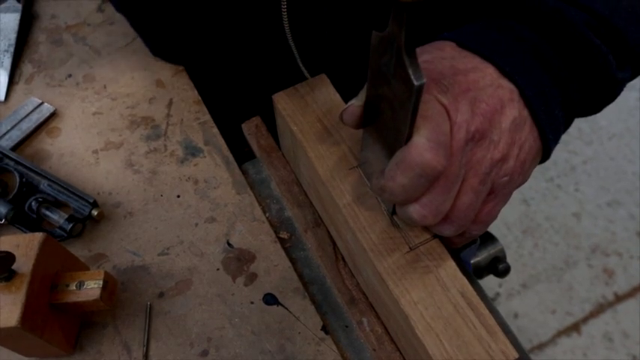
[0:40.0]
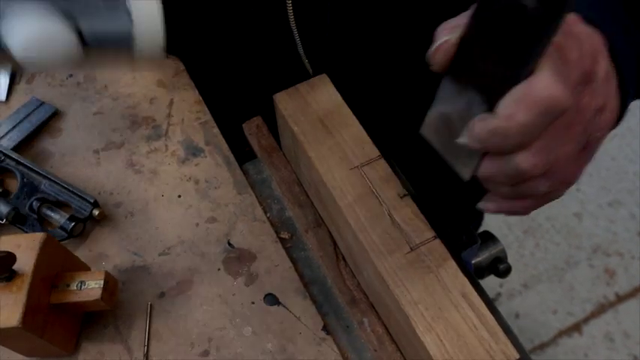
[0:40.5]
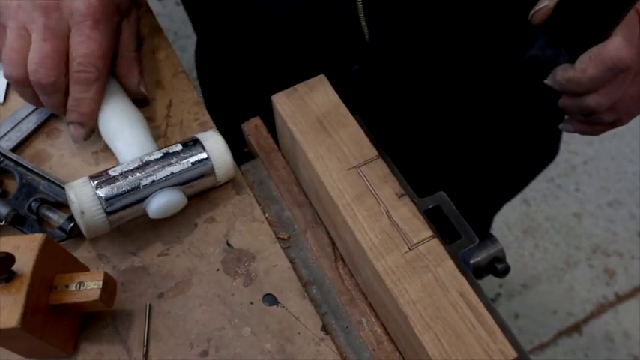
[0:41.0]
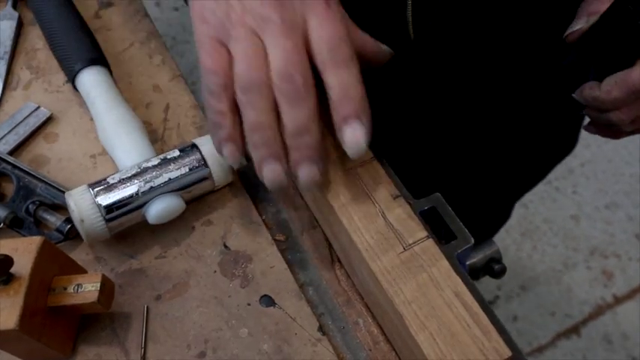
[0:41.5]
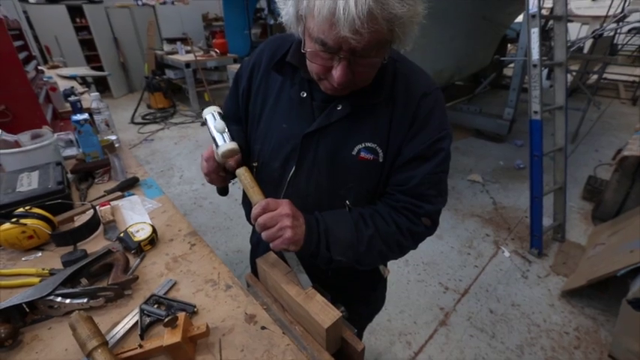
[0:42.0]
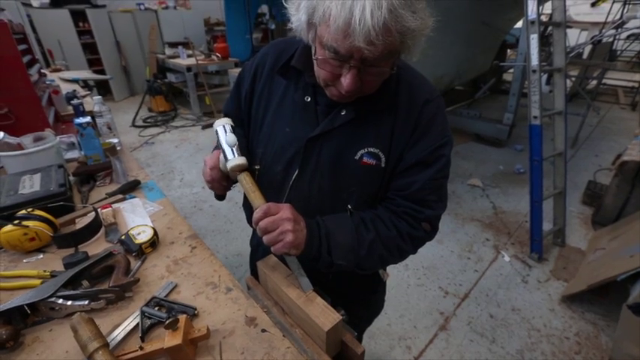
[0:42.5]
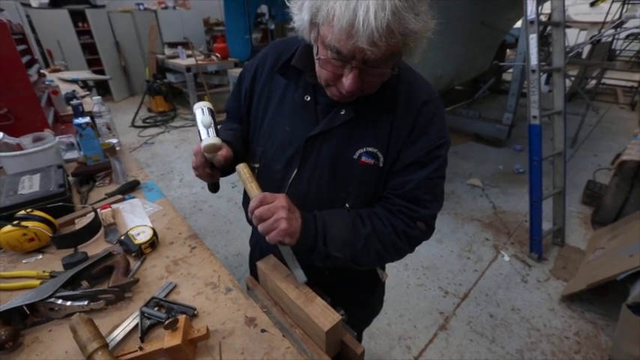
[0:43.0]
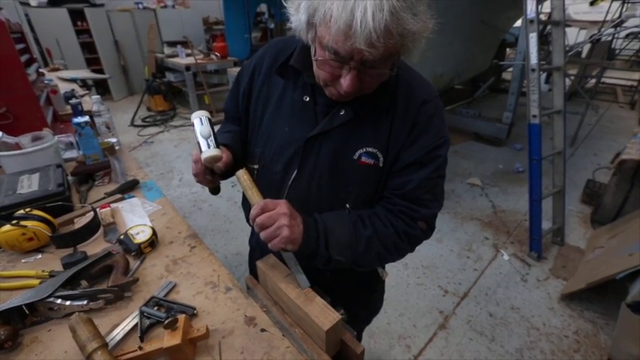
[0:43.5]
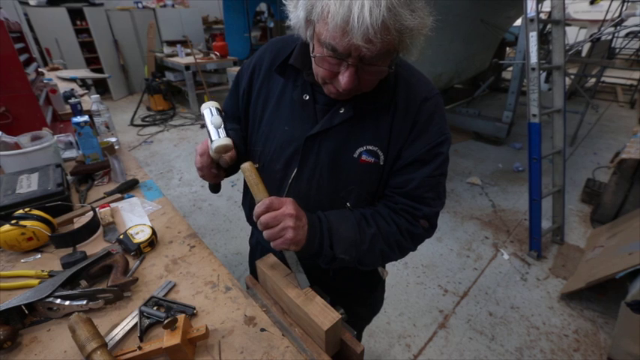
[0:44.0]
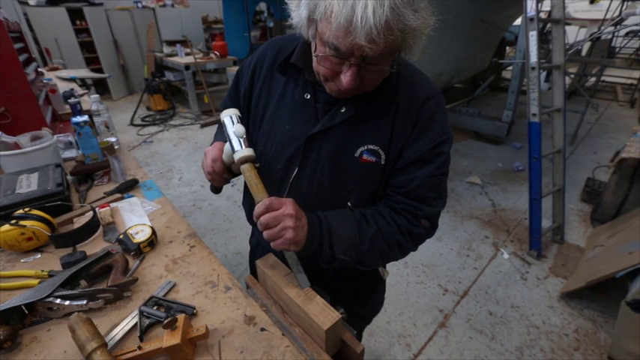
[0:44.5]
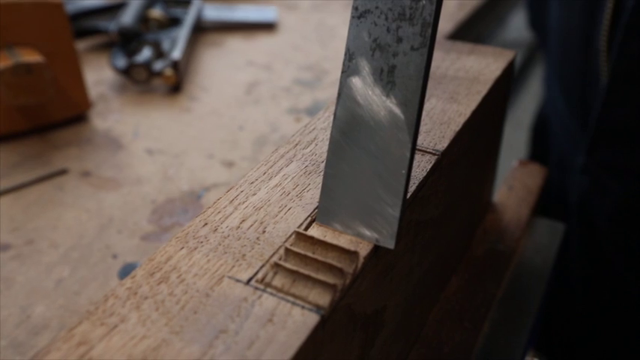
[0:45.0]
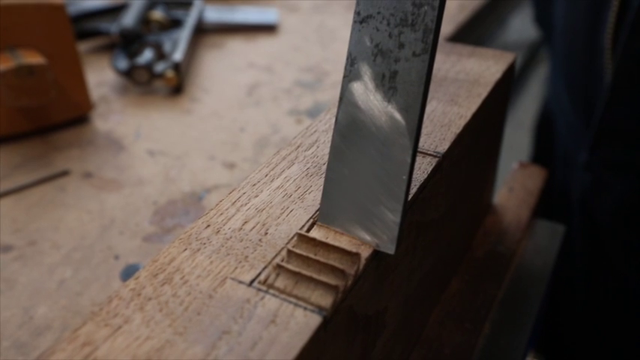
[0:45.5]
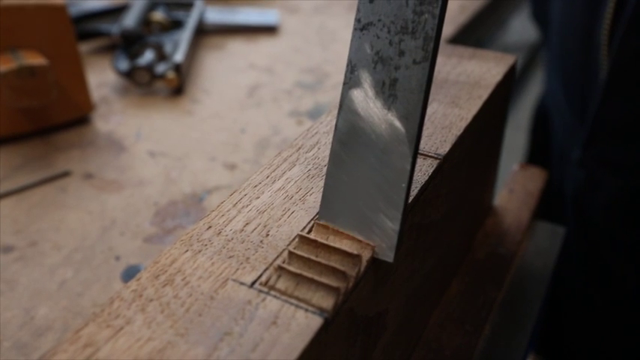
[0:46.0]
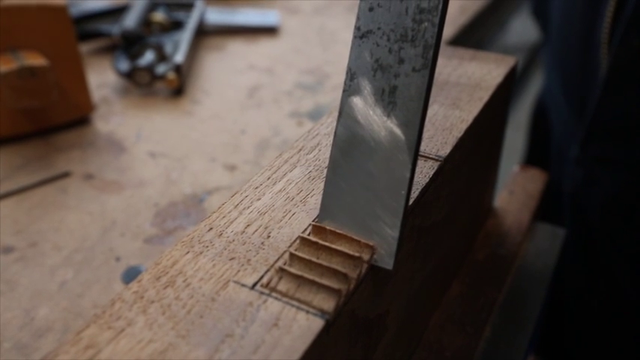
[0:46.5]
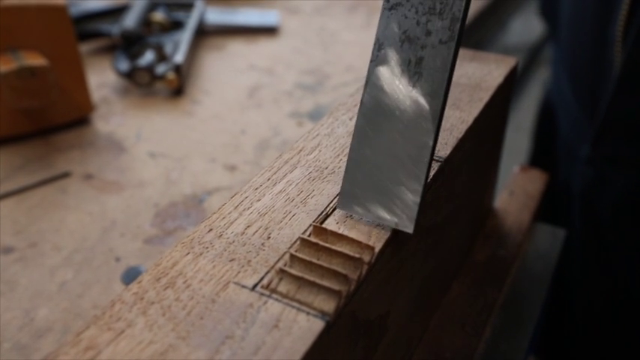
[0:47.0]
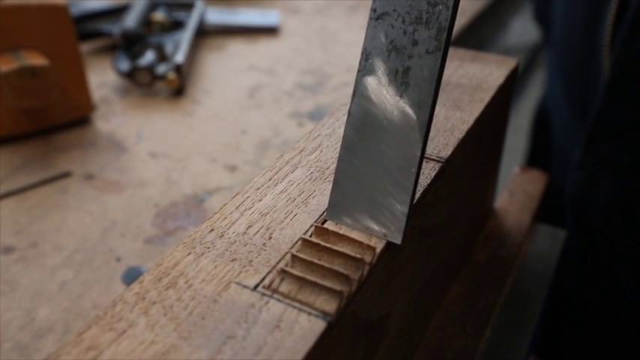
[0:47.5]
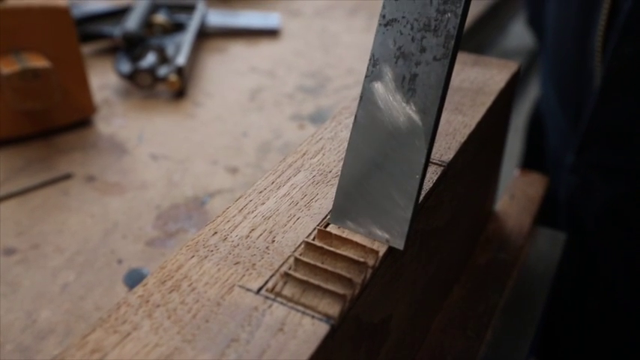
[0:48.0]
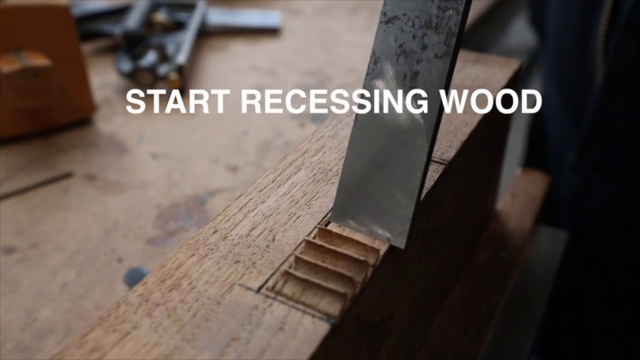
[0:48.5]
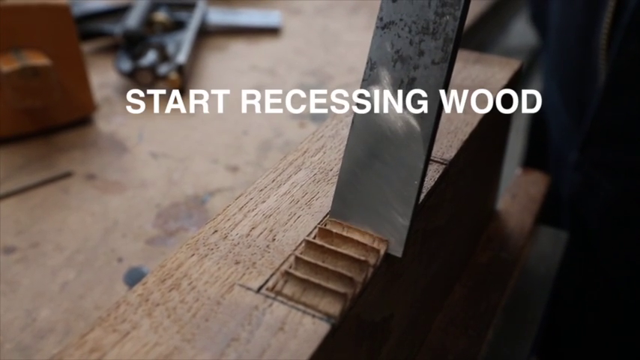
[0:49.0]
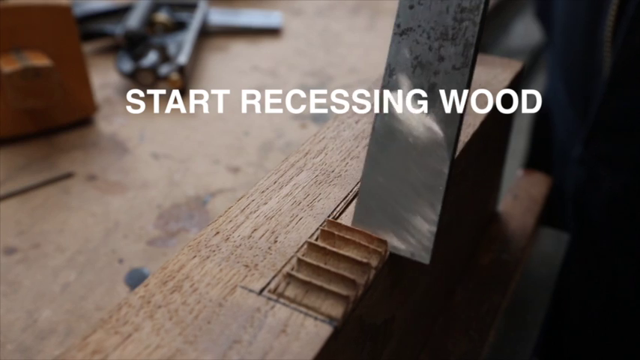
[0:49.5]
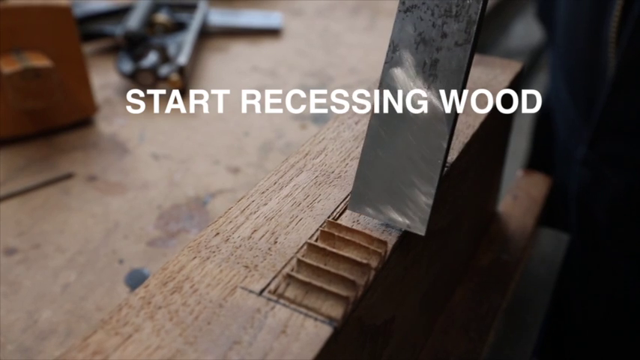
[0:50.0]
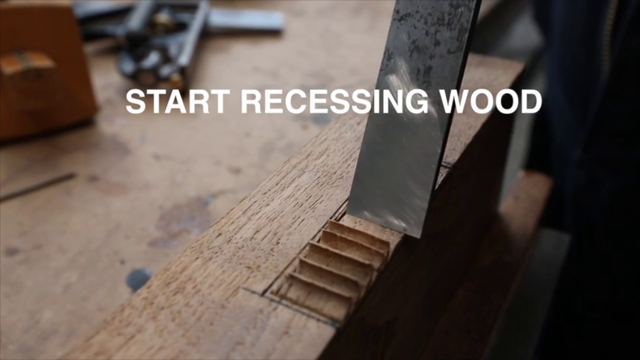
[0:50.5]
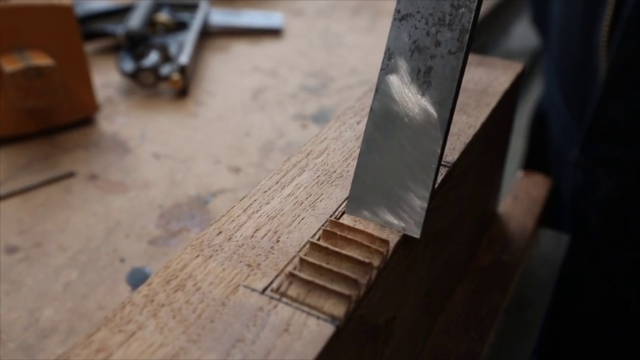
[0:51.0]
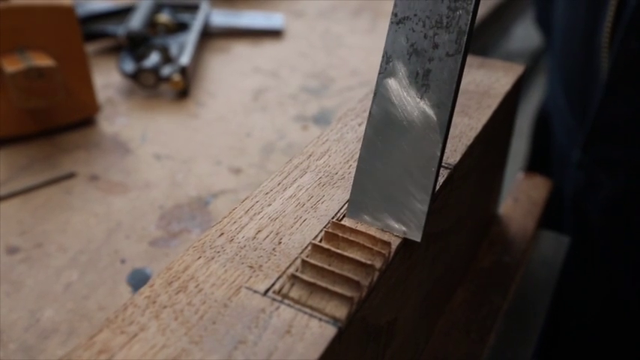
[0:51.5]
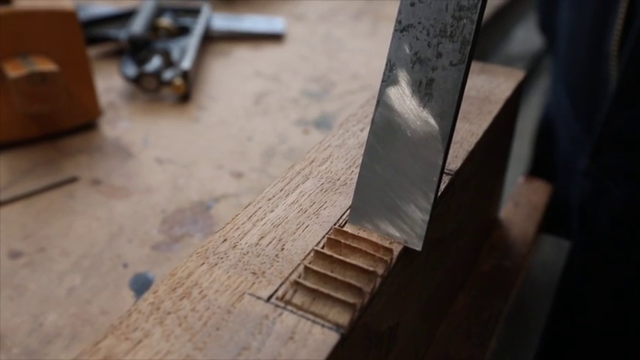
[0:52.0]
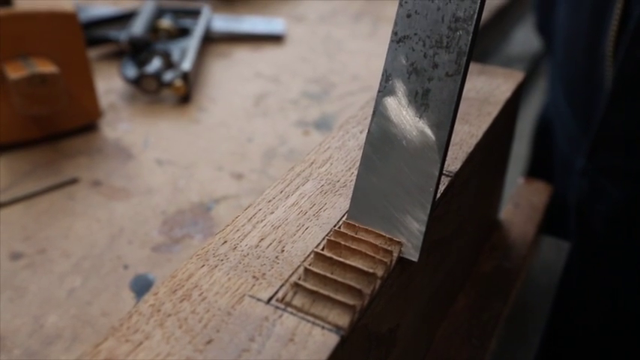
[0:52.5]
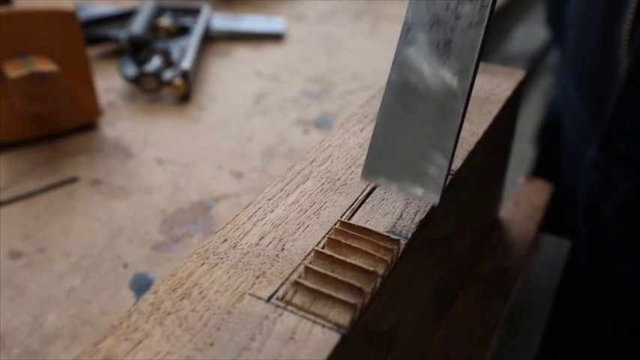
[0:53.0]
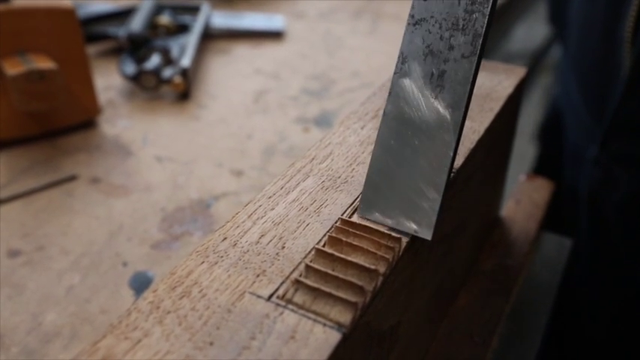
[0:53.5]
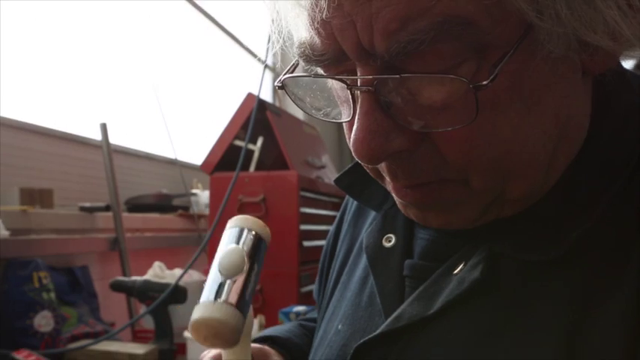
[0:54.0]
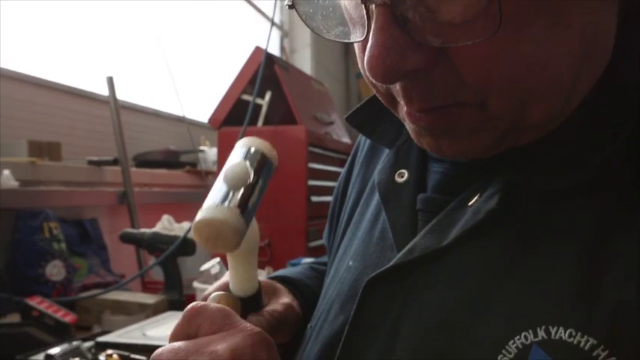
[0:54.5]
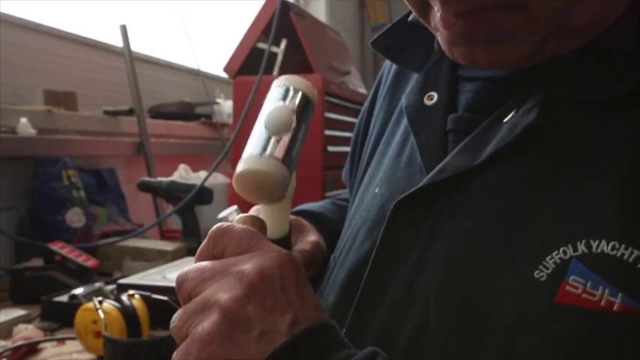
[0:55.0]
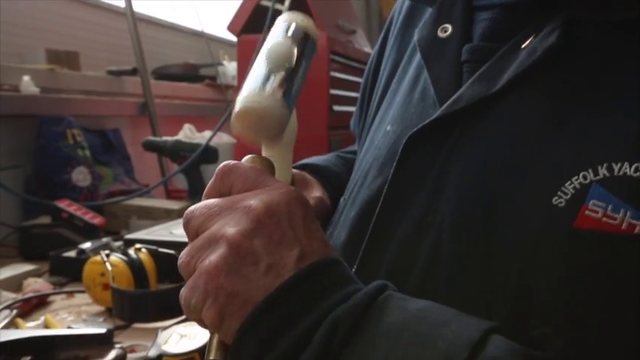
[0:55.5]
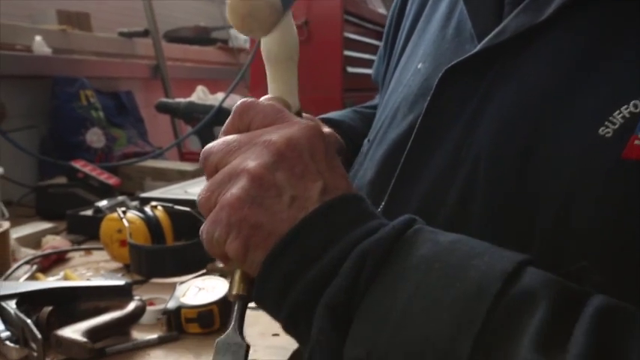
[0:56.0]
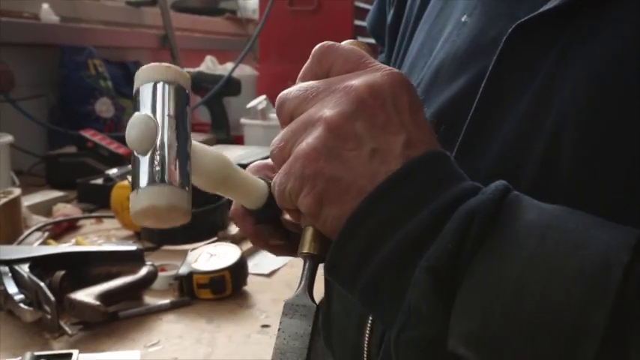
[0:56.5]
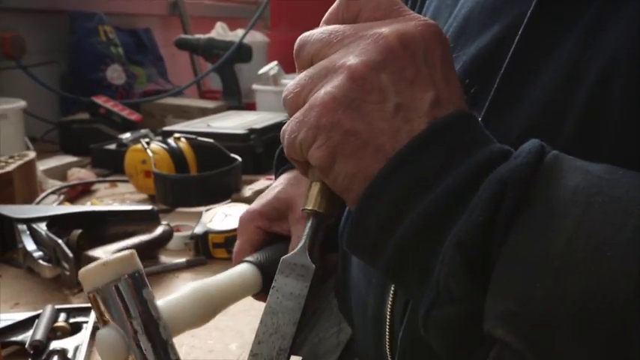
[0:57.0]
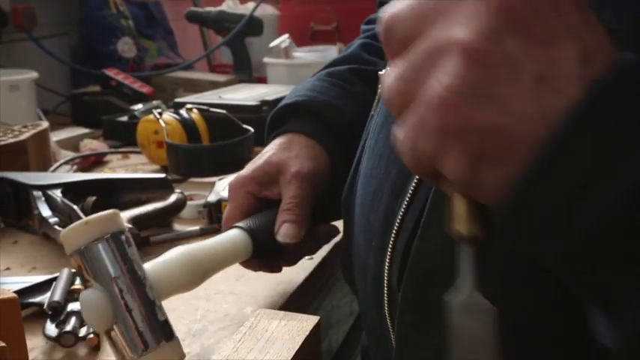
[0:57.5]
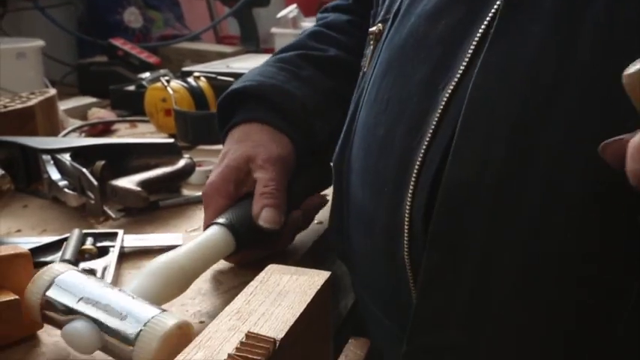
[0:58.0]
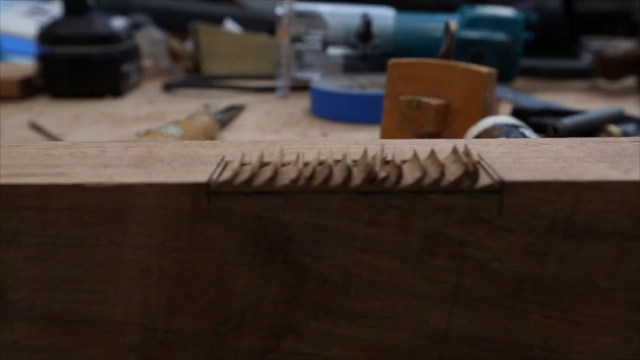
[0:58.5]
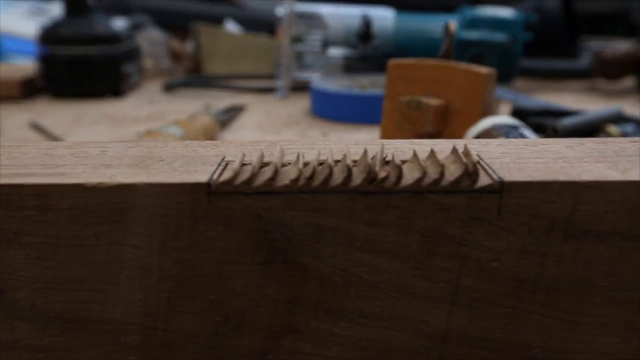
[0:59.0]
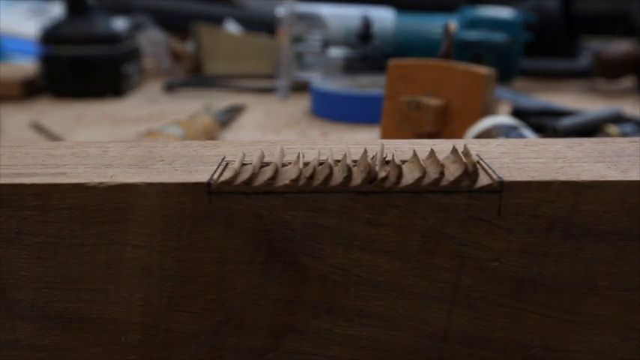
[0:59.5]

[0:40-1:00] The individual begins chiseling the wooden piece where a hinge is to go. He uses a silver mallet-type object with white bases that may be rubber, and makes indentations in the wood. Text reads "start recessing wood." He slowly and very carefully makes little notches between the lines where he drew the area for the hinge, apparently so the wood can be cleared out cleanly.